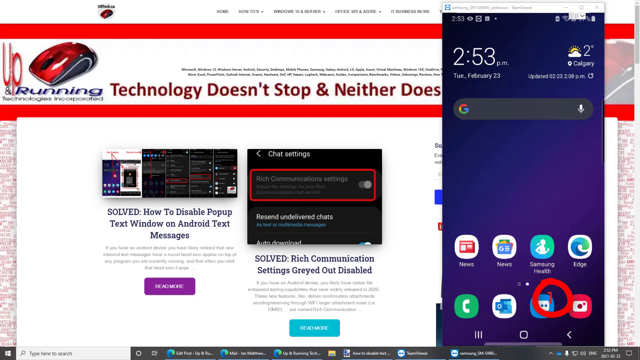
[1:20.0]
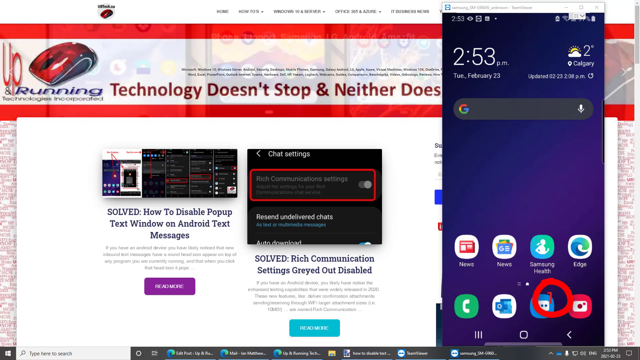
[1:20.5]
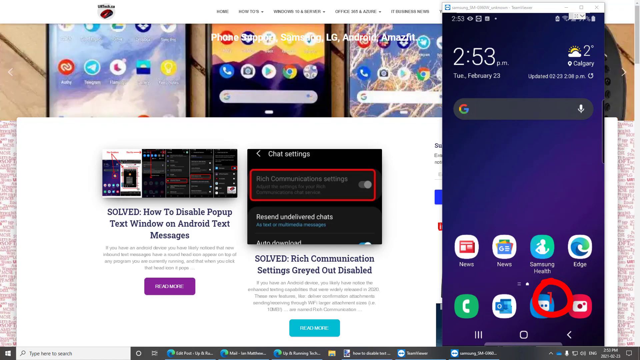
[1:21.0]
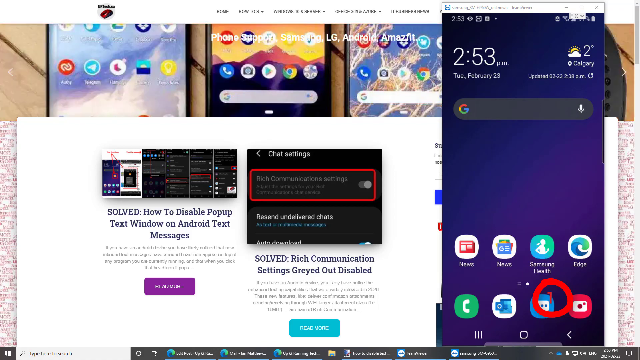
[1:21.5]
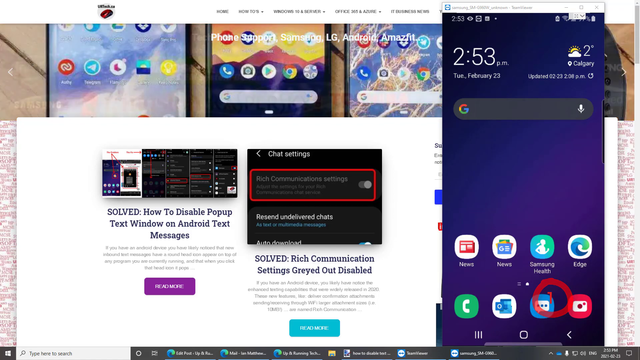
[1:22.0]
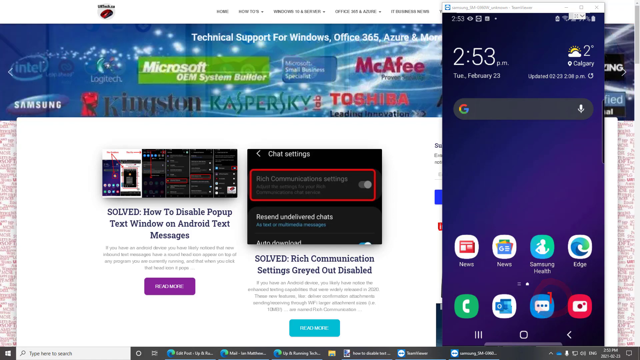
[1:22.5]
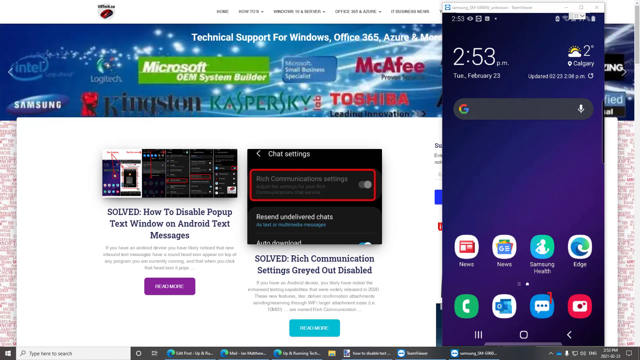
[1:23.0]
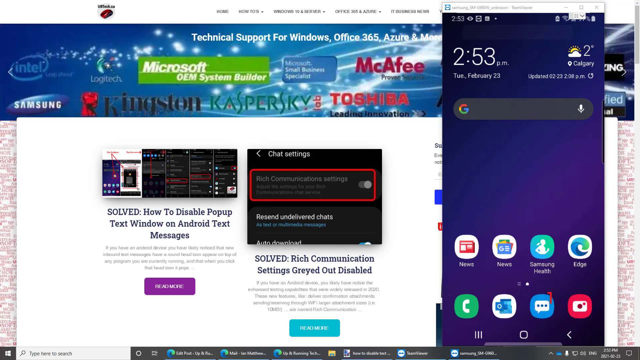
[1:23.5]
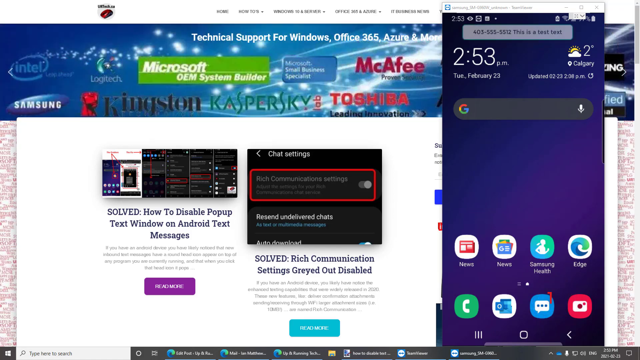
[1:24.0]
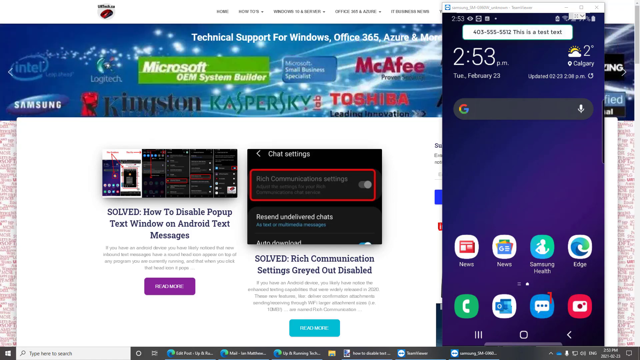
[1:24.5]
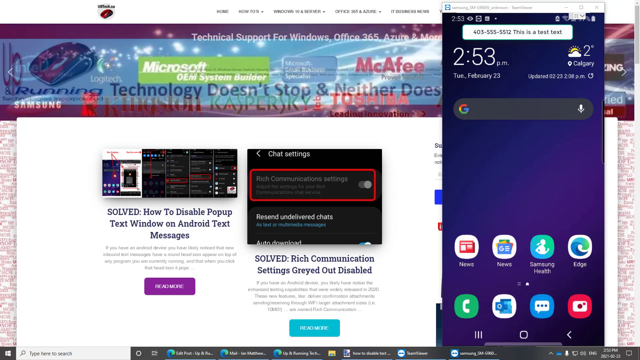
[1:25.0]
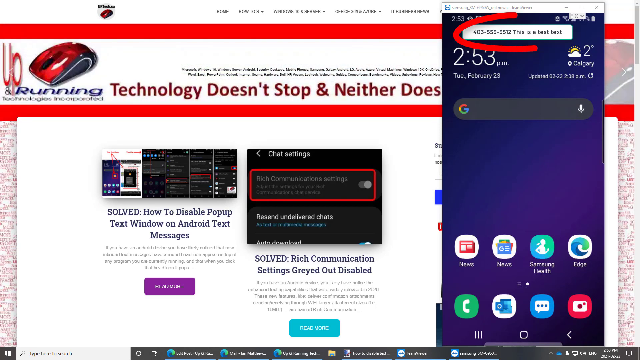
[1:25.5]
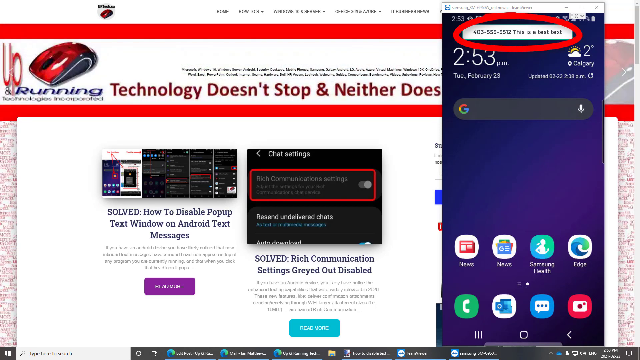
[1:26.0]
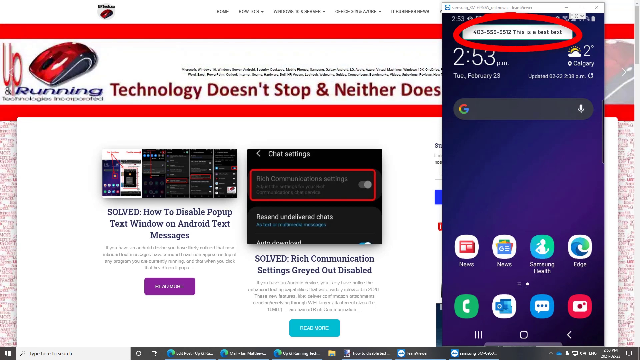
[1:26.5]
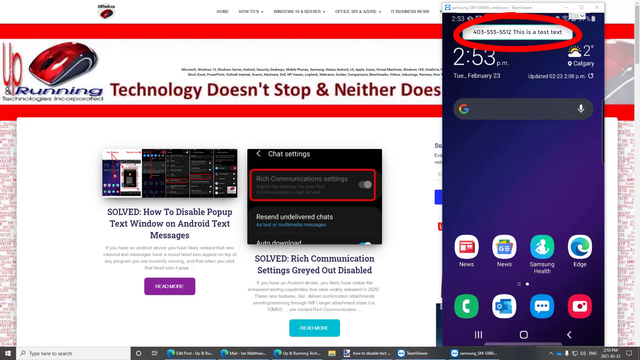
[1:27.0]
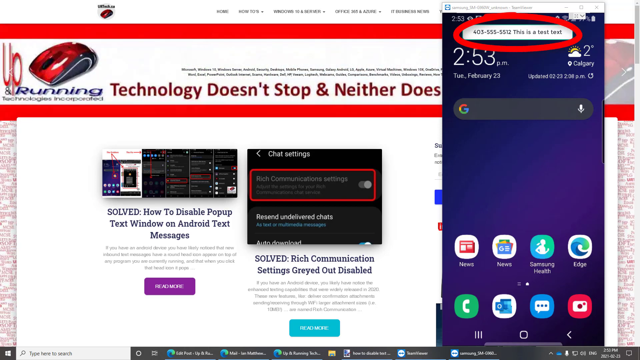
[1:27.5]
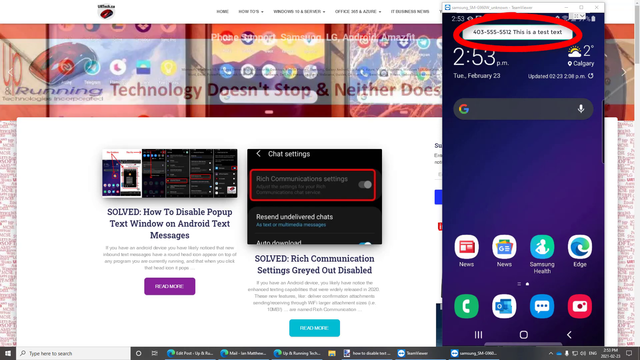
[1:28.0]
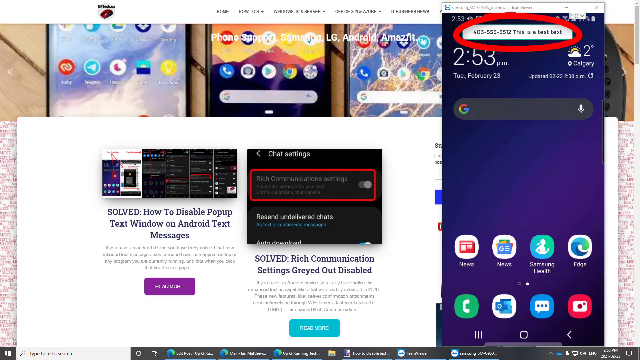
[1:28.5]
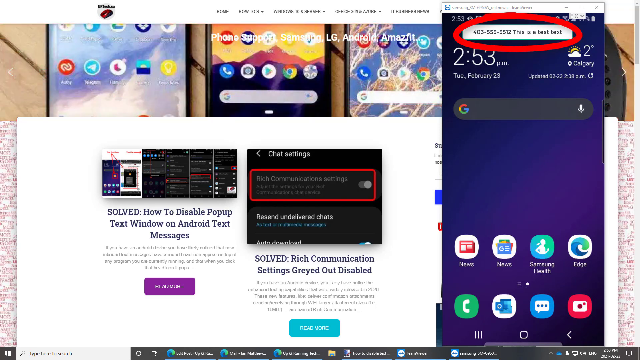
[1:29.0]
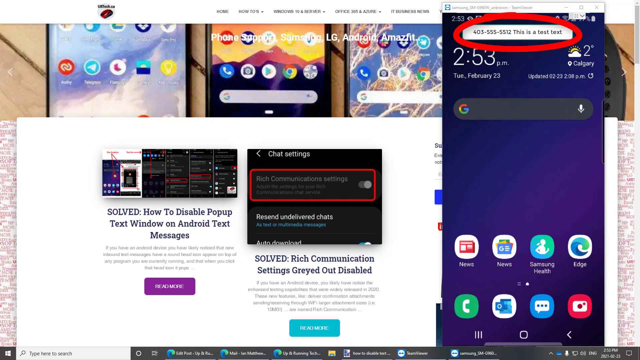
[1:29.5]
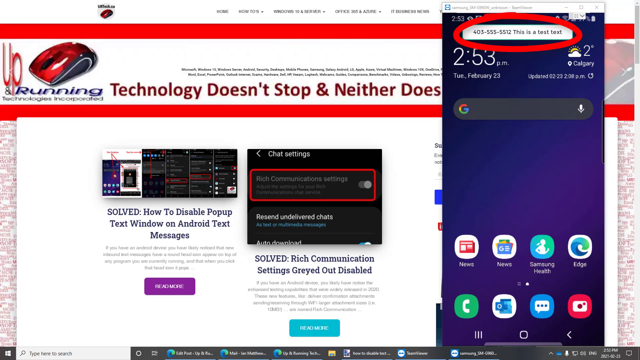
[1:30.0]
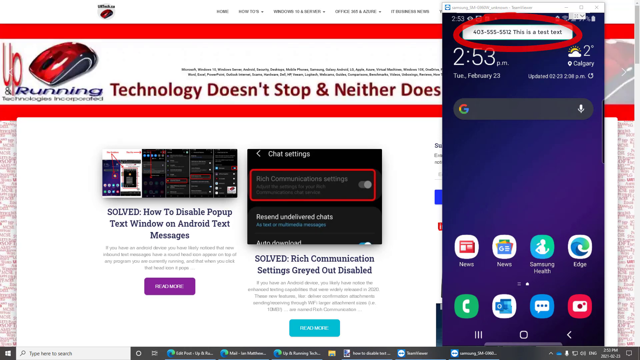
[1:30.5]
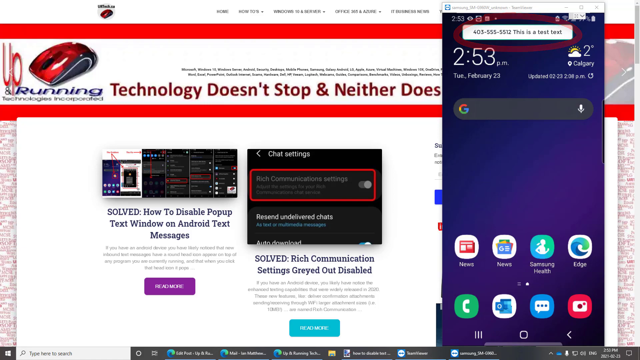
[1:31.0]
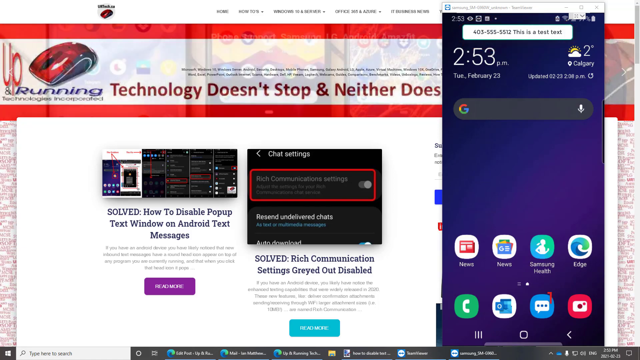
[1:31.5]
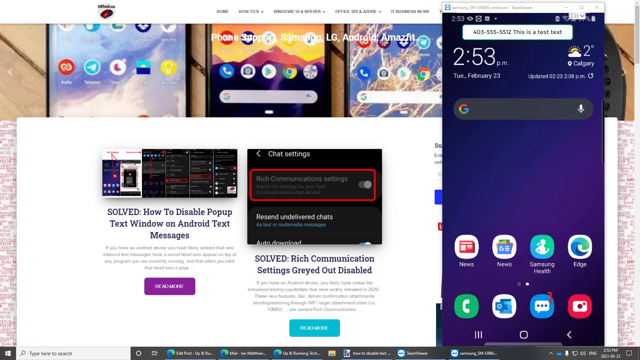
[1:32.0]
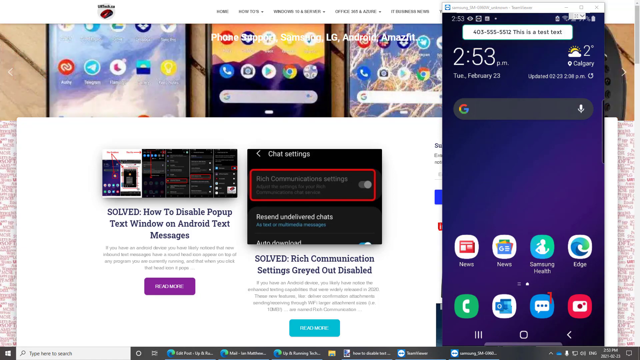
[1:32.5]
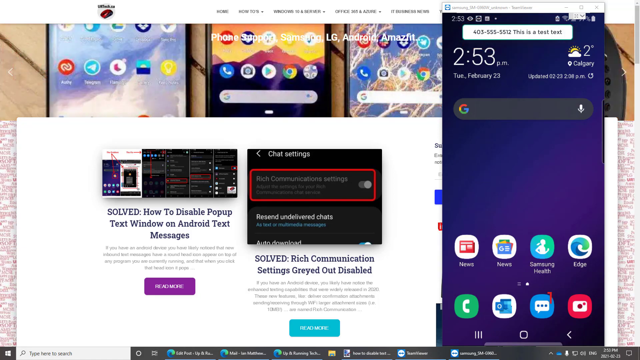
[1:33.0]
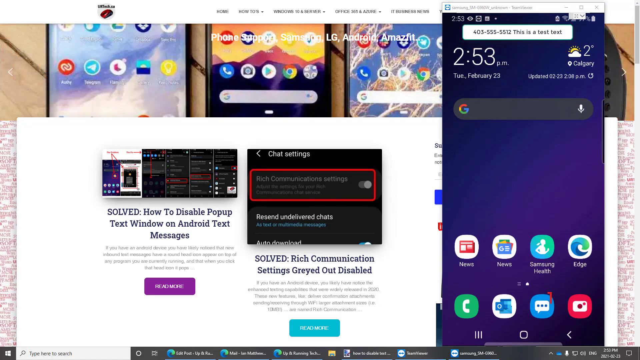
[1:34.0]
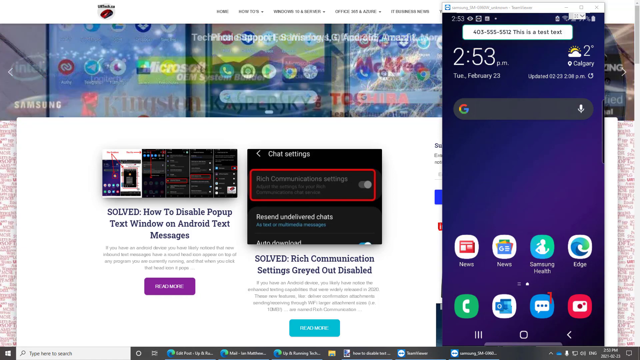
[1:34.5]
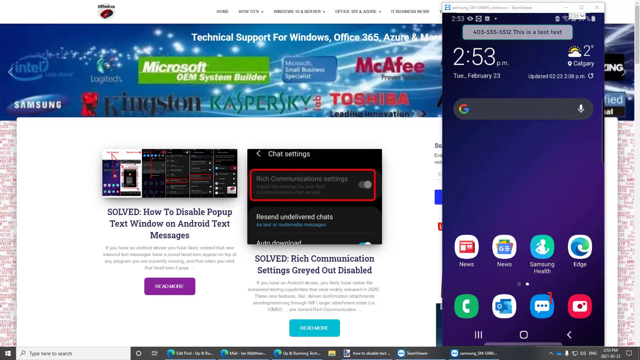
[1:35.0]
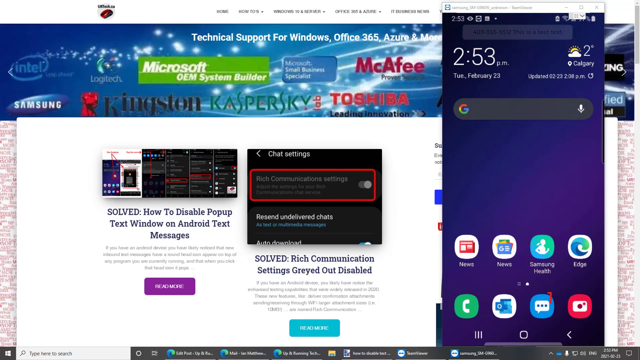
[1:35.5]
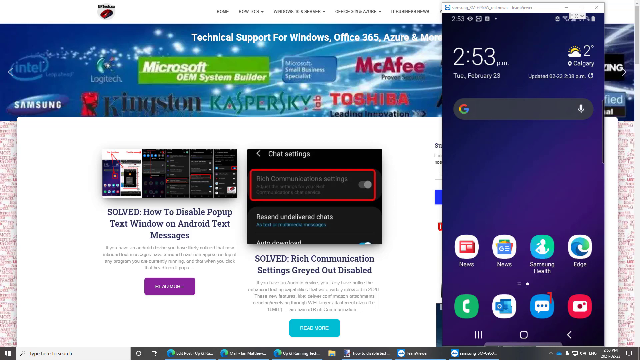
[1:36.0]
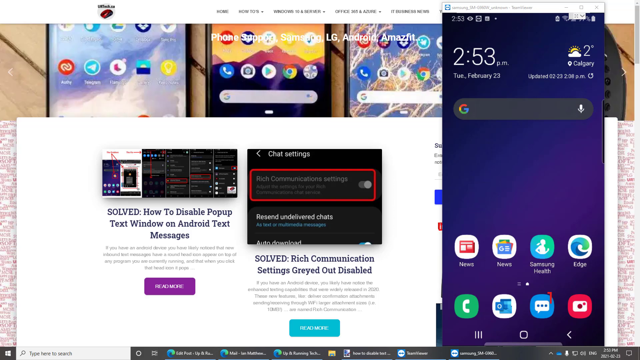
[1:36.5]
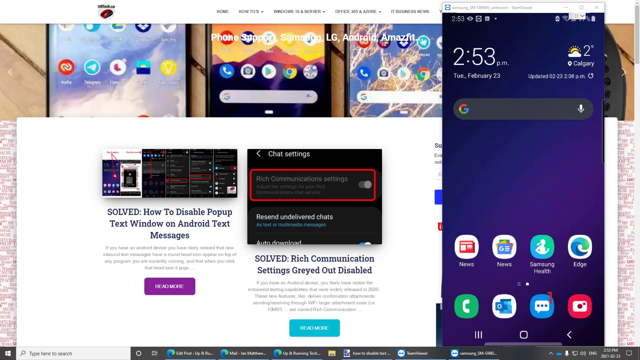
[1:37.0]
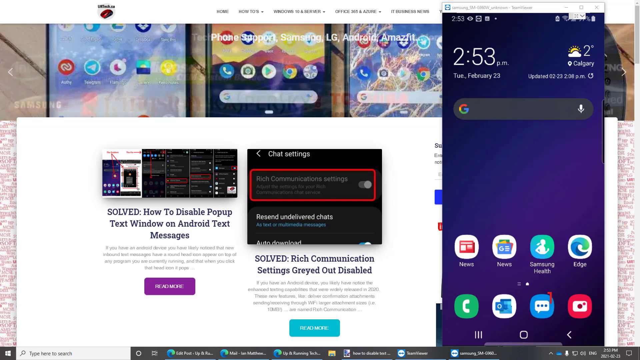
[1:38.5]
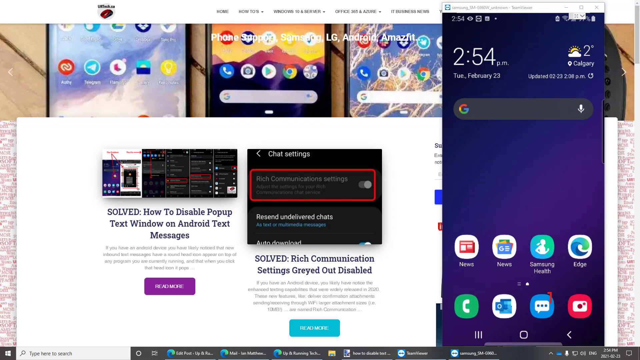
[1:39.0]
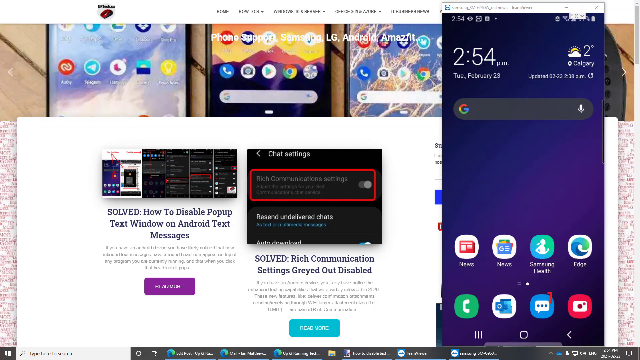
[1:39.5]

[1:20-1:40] The IT how-to video continues, showing how to change a setting on a smartphone. The main background is a computer desktop running Windows 10 with several Edge tabs open; the main tab, taking up most of the background, is the IT help website urtech.ca. Two articles are visible in the middle of the screen, and the middle one, titled "Solved. Rich Communication settings grayed out disabled," appears to be the focus of the video. To its right is another screen share of the Samsung Android smartphone. After the setting is updated, there is a red circle around the message. The phone is on the home screen; he clicks something, and at the top of the phone screen share a test message comes through, indicating that the rich communication setting has apparently been fixed. At the top of the background are several ads, mostly for URtech, with a couple for other tech companies popping up. As the ads flicker in and out, the computer desktop, showing several pictures of smartphones, is briefly visible.